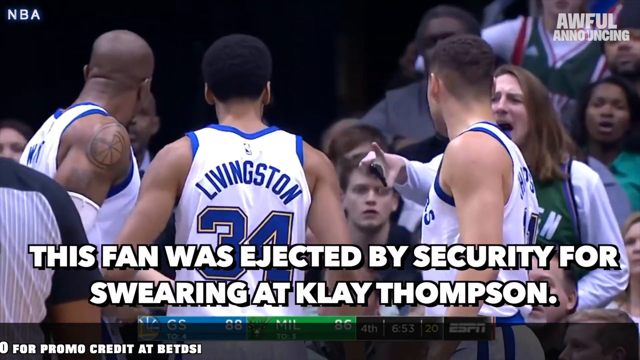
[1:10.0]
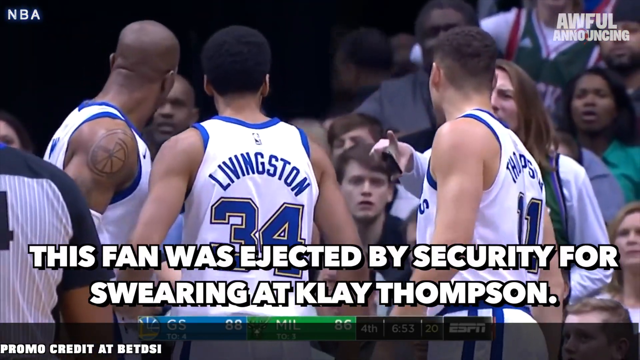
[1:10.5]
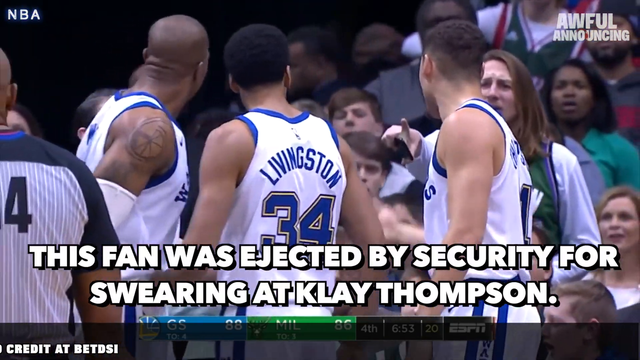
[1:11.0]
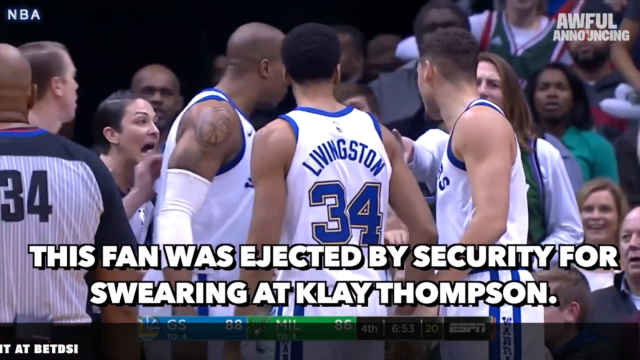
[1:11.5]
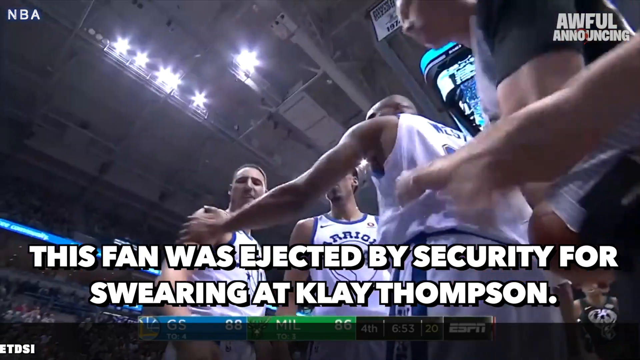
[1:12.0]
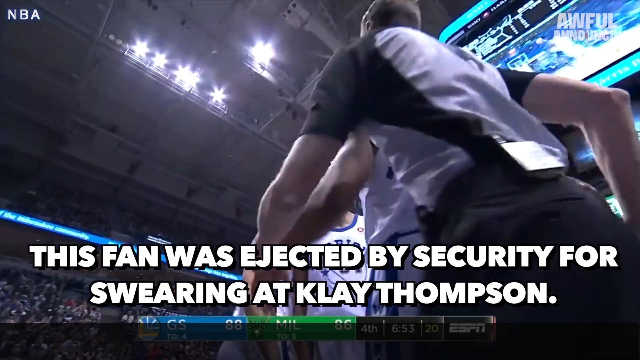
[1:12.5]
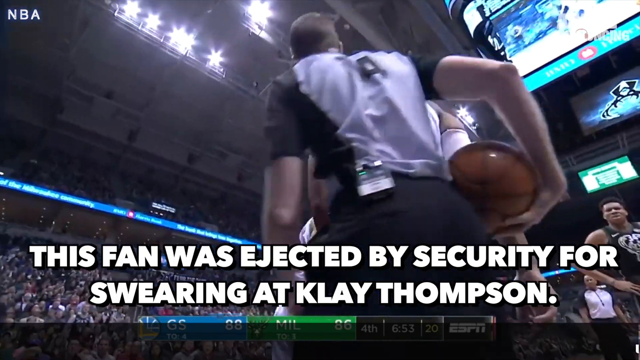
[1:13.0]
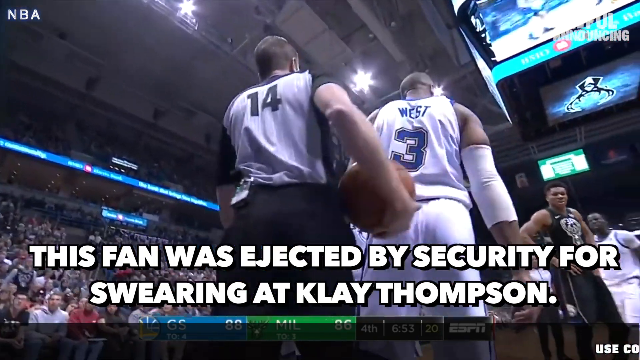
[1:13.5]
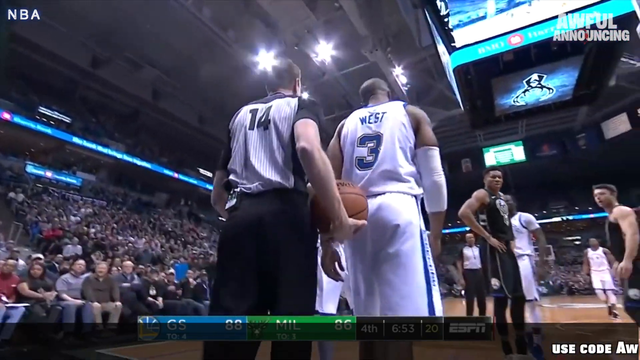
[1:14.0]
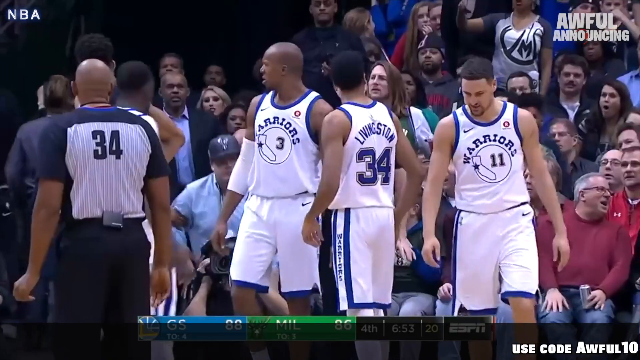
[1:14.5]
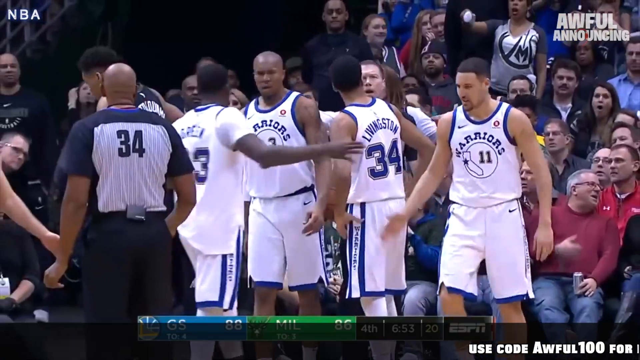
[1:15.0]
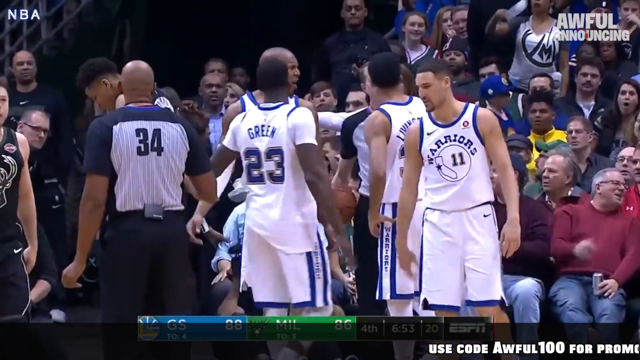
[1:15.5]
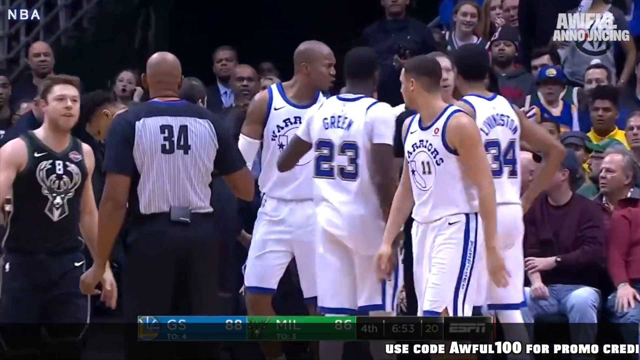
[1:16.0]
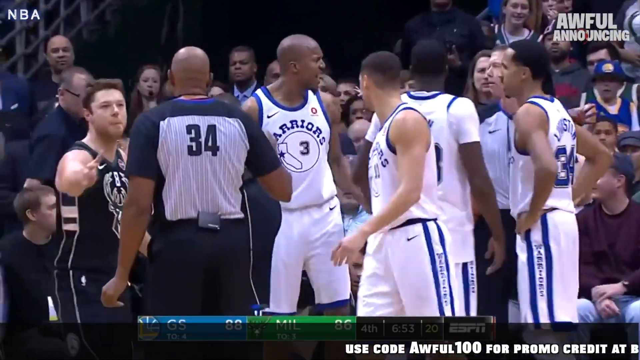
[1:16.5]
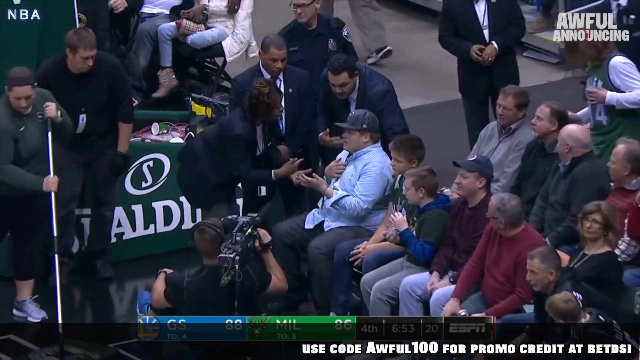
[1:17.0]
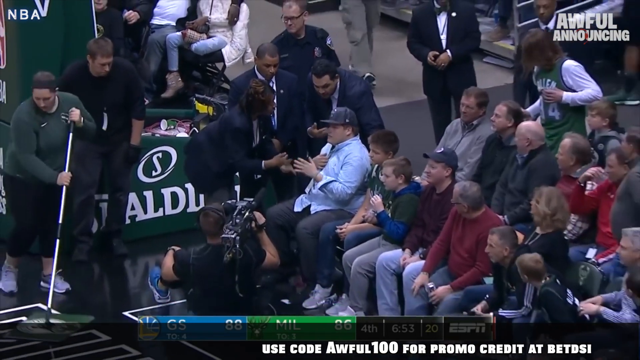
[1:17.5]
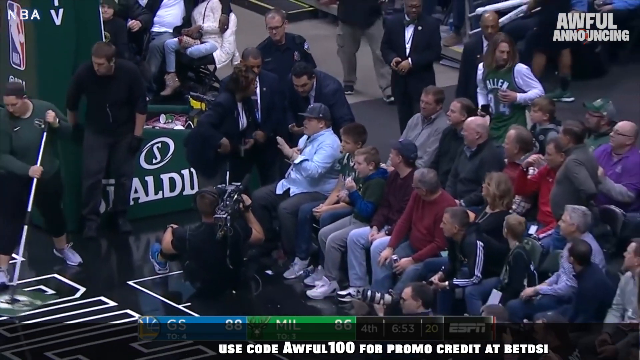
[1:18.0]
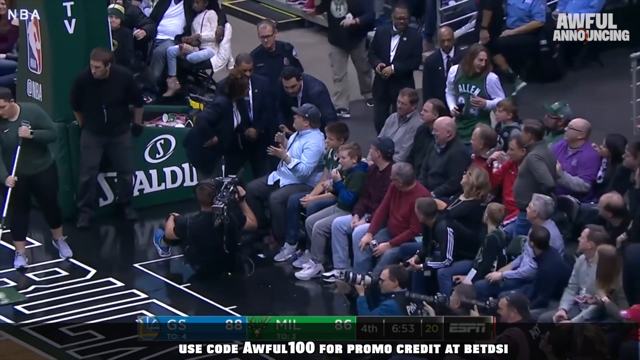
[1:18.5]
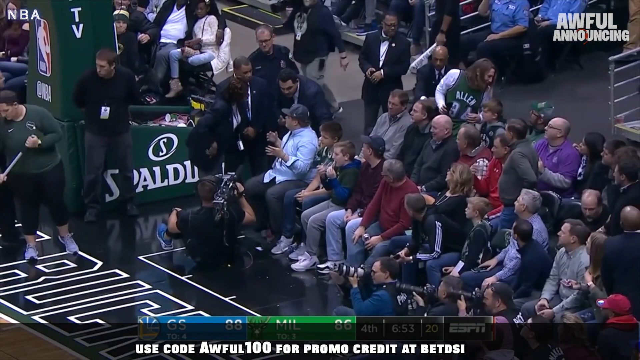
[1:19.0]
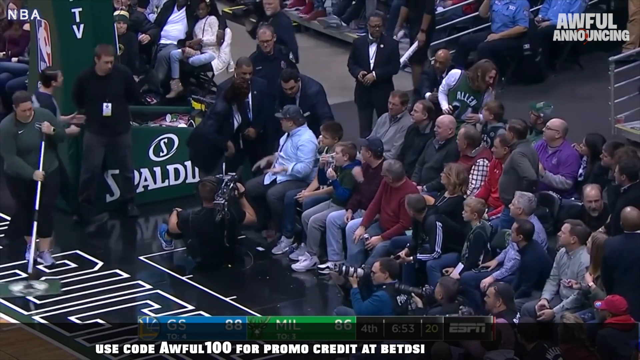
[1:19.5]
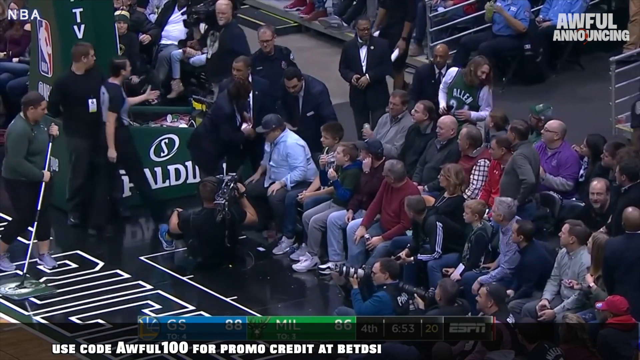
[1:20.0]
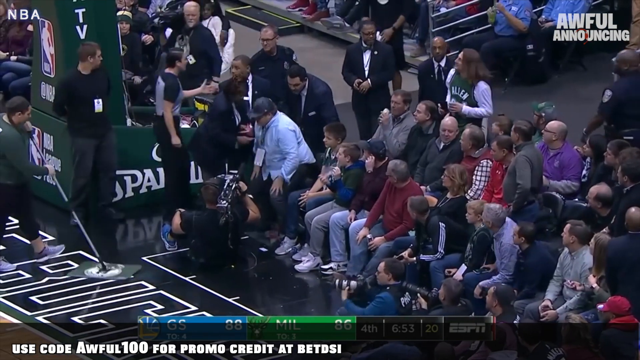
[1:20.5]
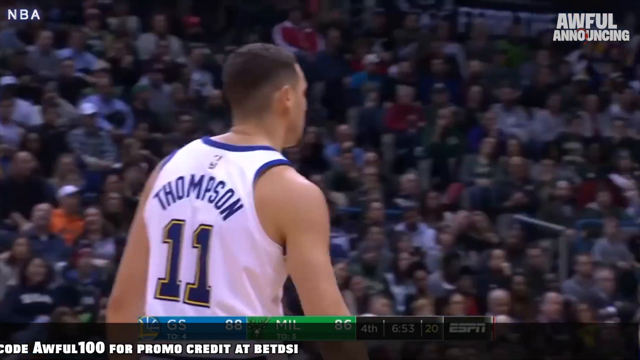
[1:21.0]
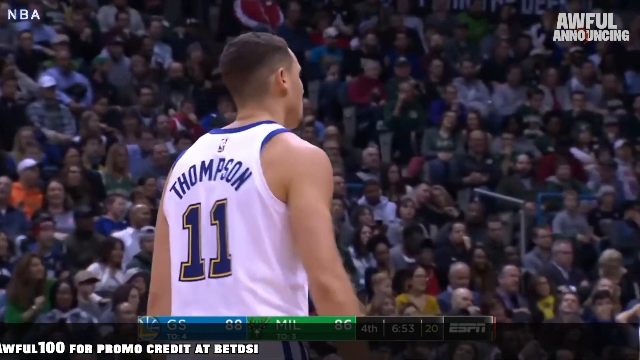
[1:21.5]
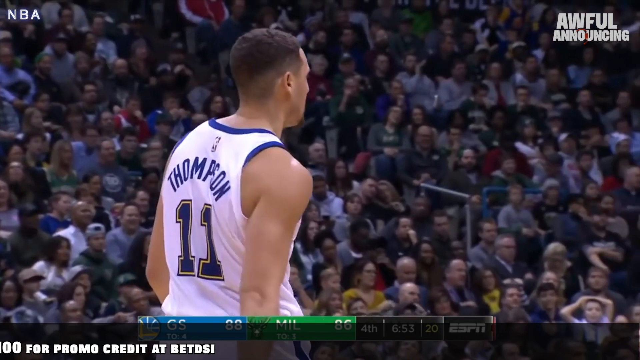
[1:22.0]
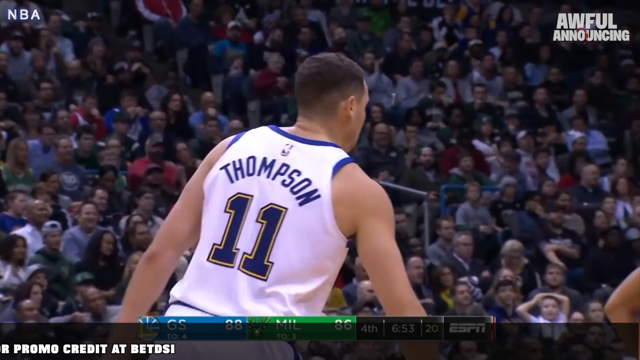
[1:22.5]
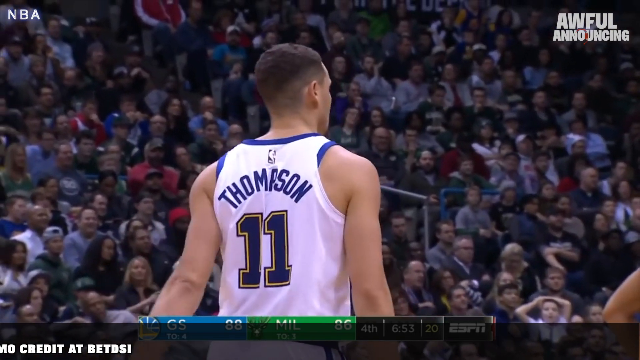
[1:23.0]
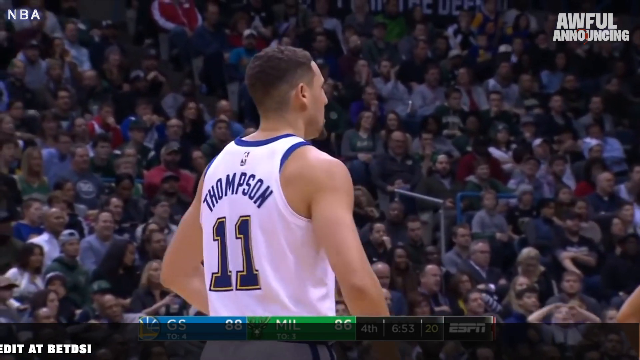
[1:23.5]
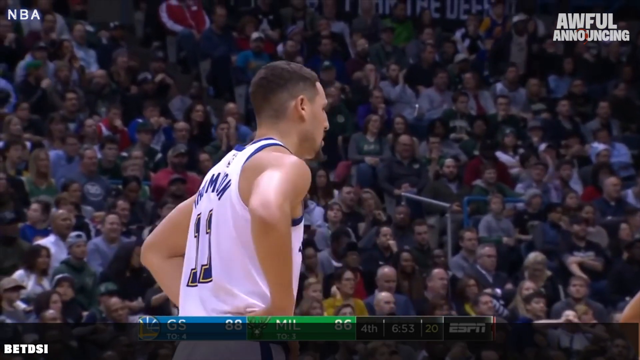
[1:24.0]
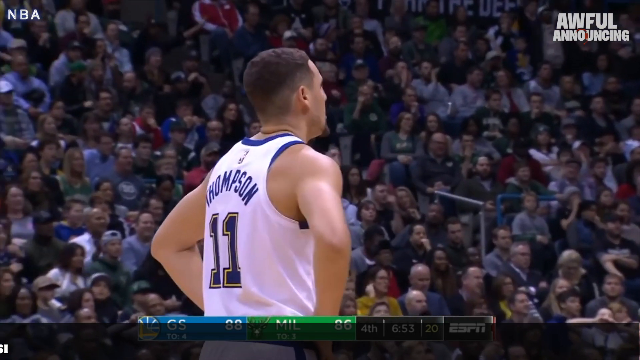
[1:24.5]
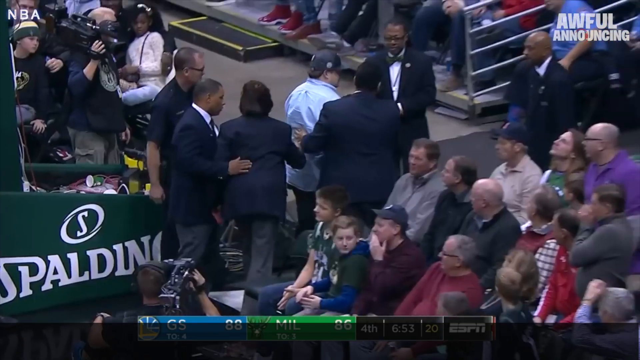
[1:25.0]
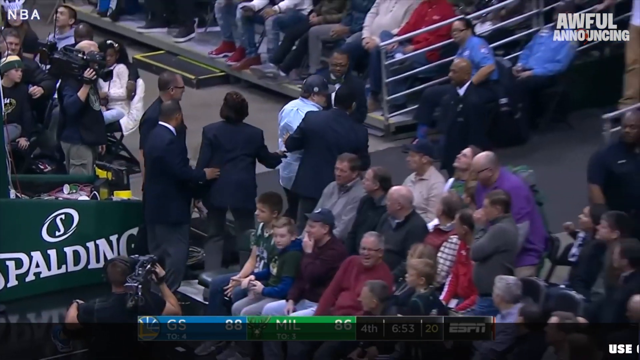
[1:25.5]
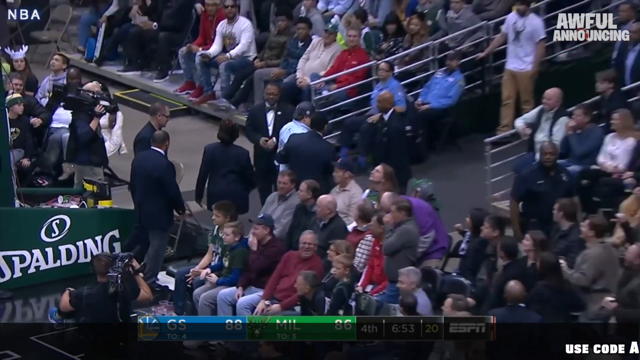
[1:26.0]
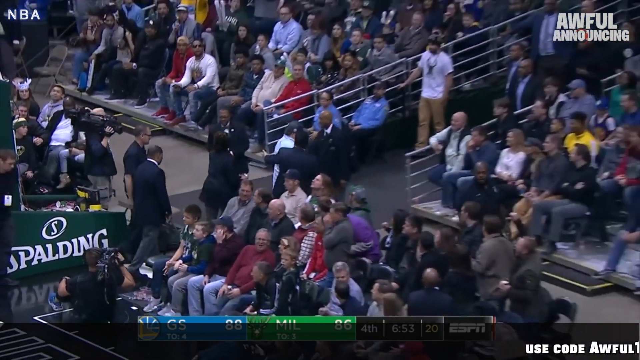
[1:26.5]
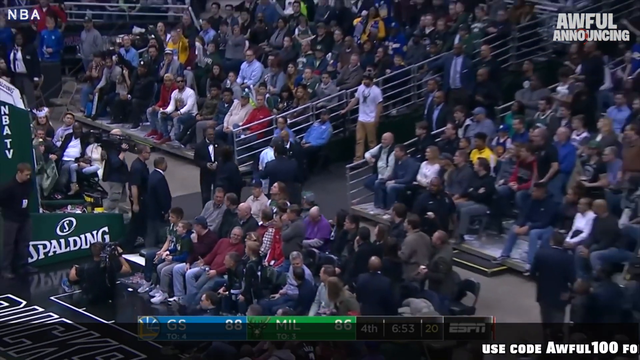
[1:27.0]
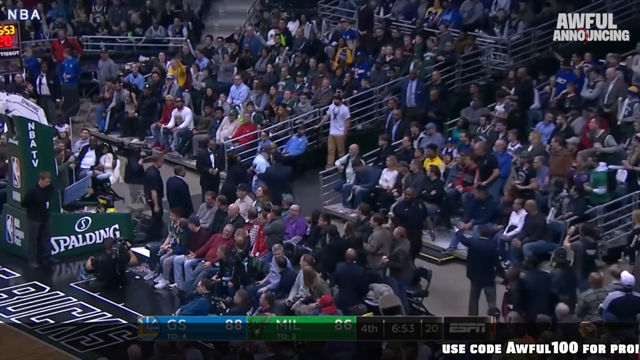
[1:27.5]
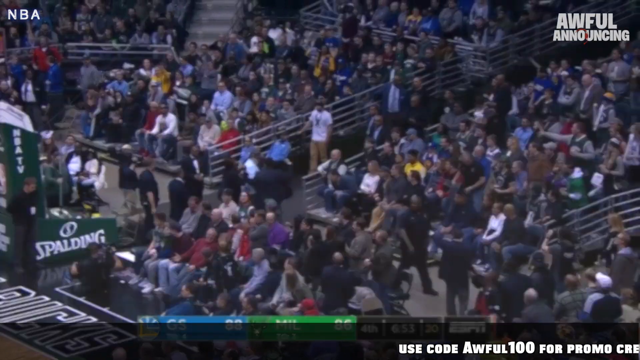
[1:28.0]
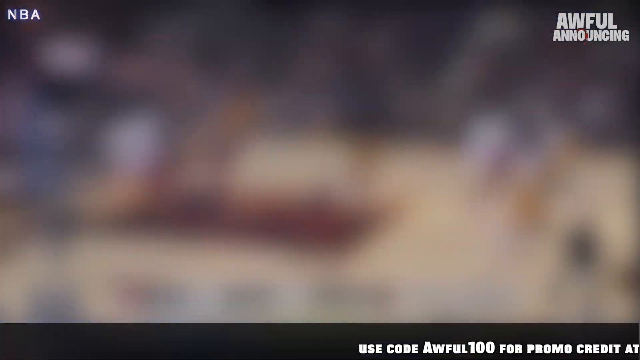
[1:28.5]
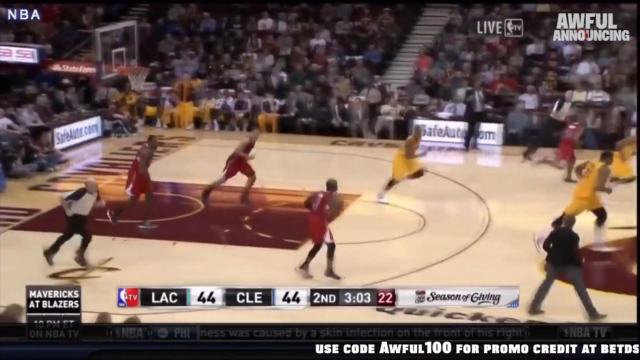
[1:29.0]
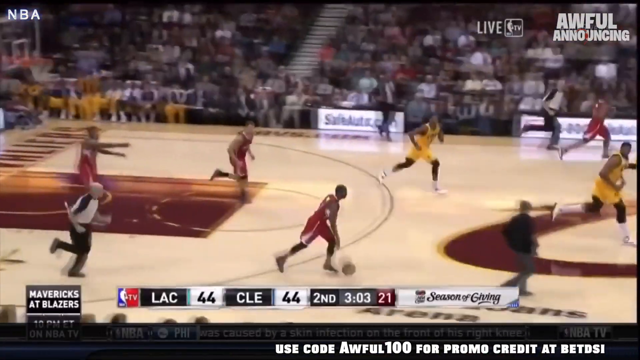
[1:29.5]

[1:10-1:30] Basketball players of the Golden State Warriors have a heated interaction with a fan in the stands, while text at the bottom center of the screen reads "this fan was ejected by security for swearing at Klay Thompson." Several fans in the stands watch the interaction take place. A different angle of the arena then shows several people in the stands. The setting is indoors with a good amount of artificial light so everything is clear and visible, and some of the lights can be seen at the top of the stadium. The words "awful announcing" are in the upper right-hand corner and "MBA" in the upper left-hand corner. The entire video is rectangular.